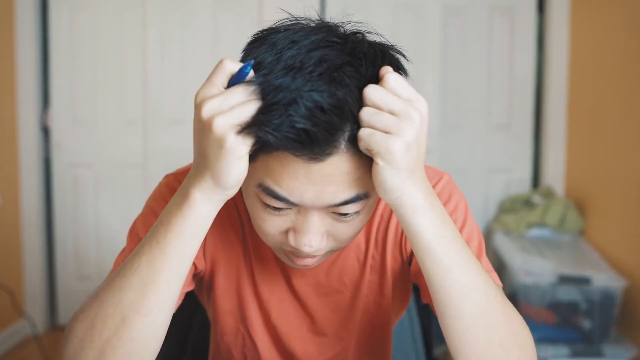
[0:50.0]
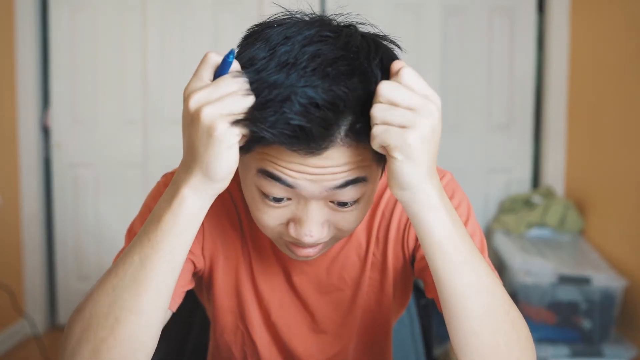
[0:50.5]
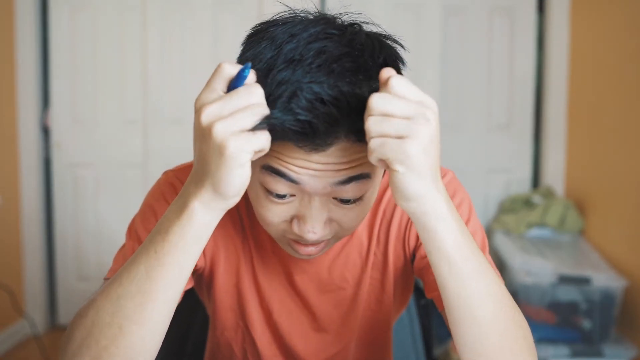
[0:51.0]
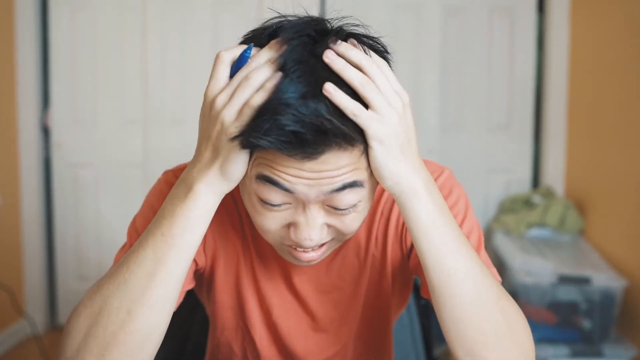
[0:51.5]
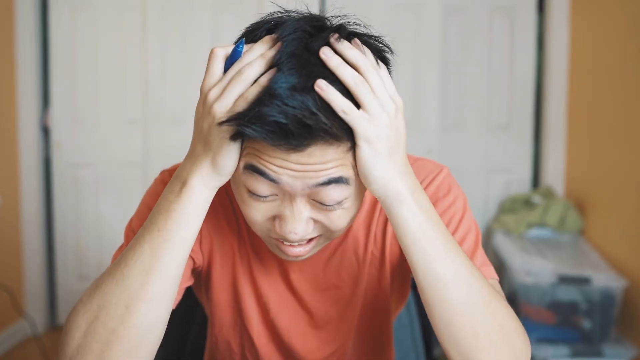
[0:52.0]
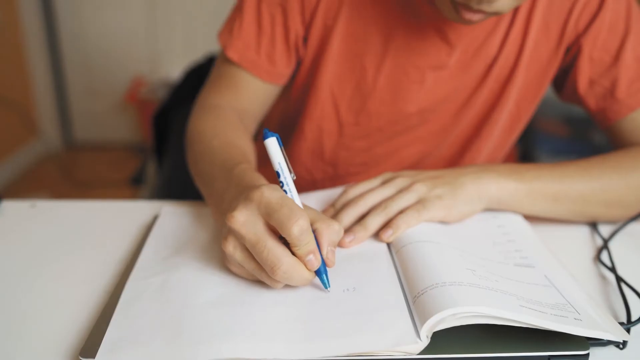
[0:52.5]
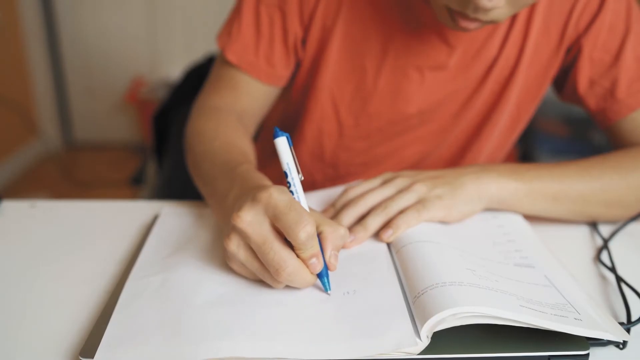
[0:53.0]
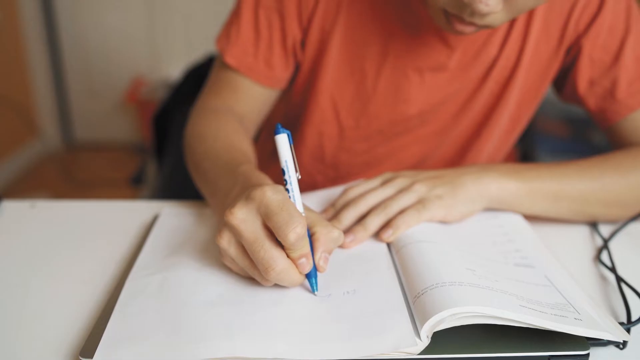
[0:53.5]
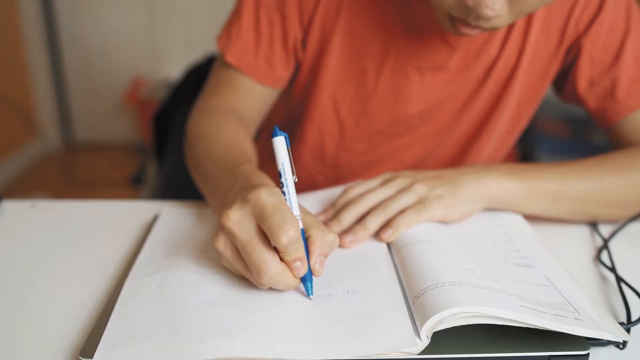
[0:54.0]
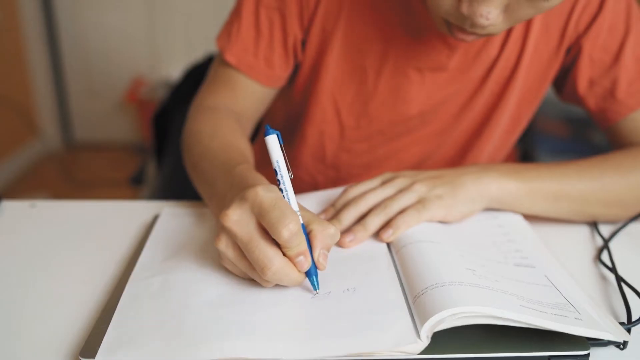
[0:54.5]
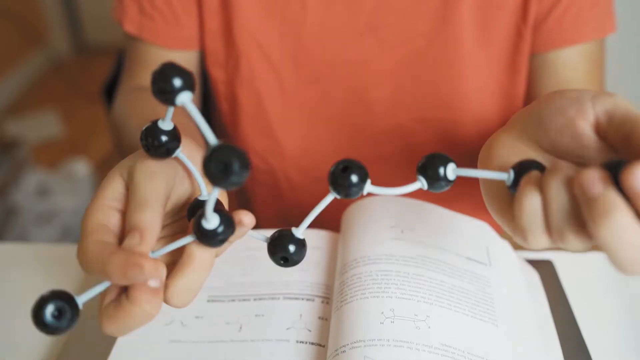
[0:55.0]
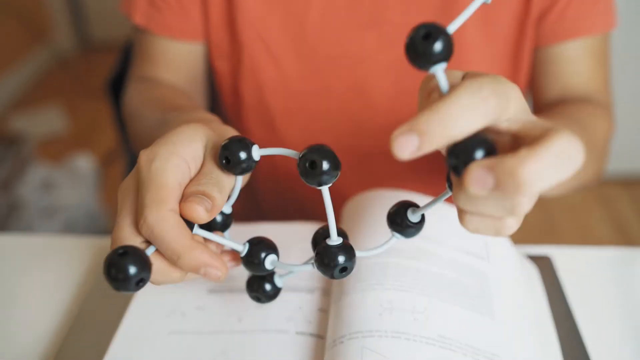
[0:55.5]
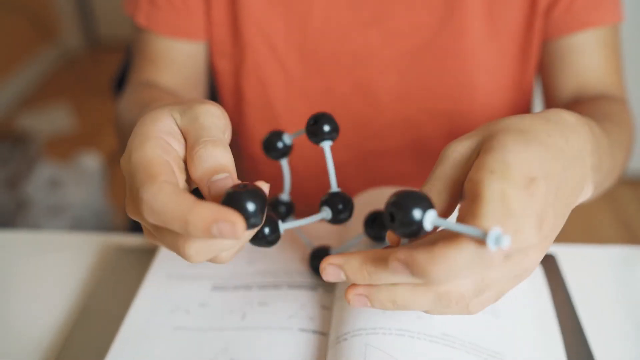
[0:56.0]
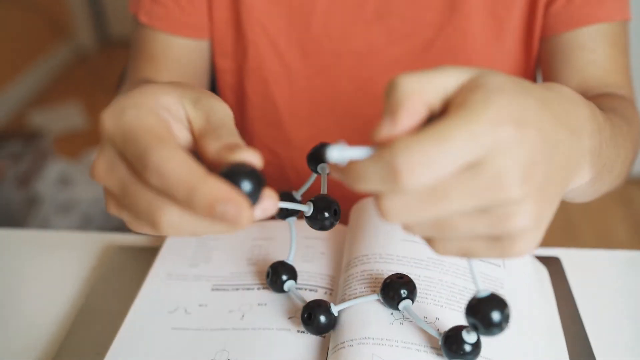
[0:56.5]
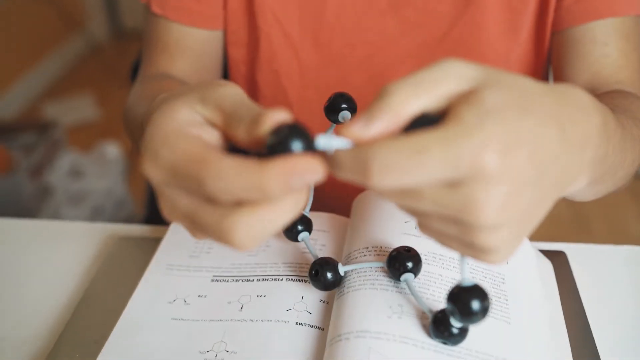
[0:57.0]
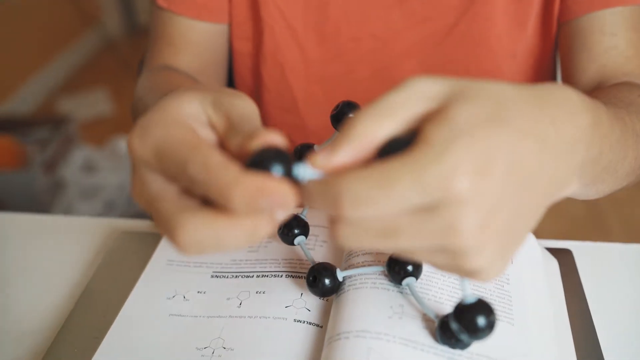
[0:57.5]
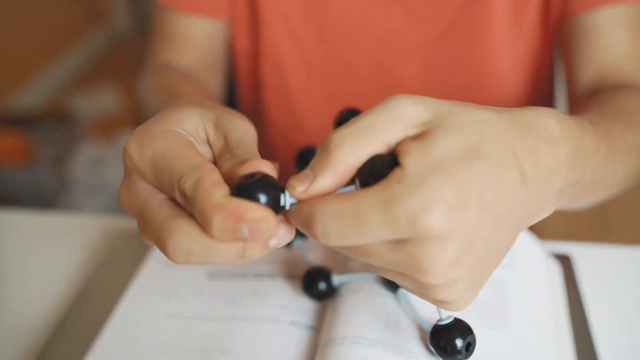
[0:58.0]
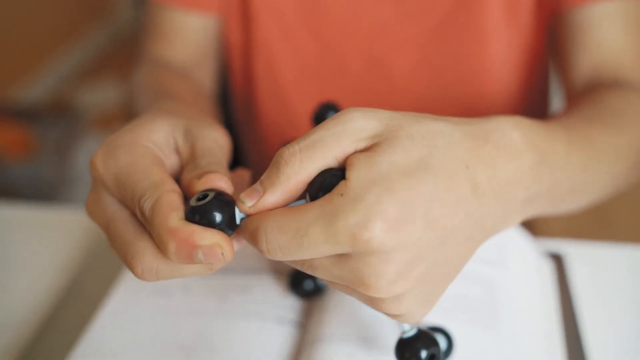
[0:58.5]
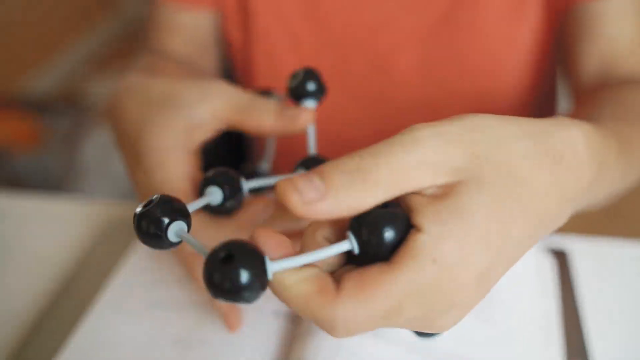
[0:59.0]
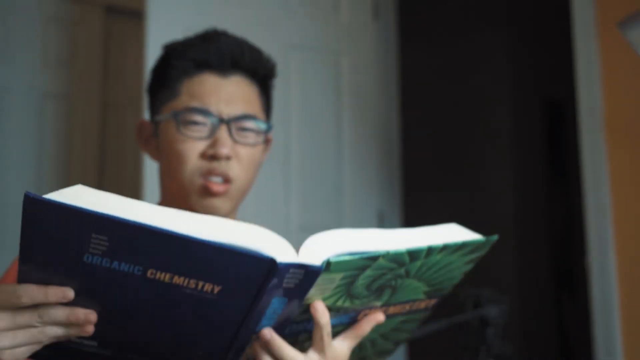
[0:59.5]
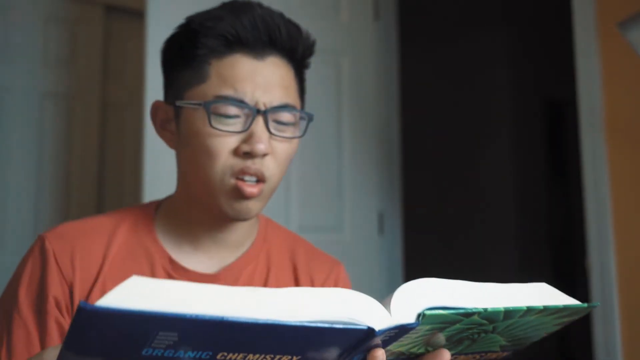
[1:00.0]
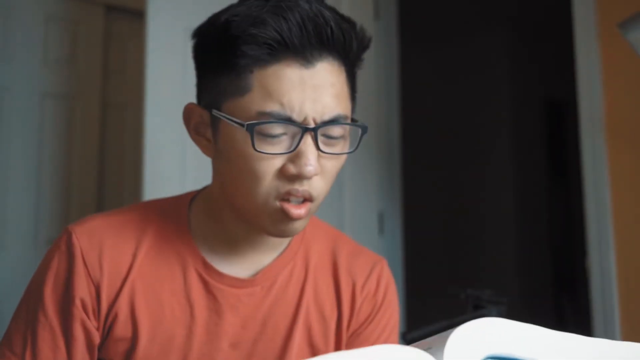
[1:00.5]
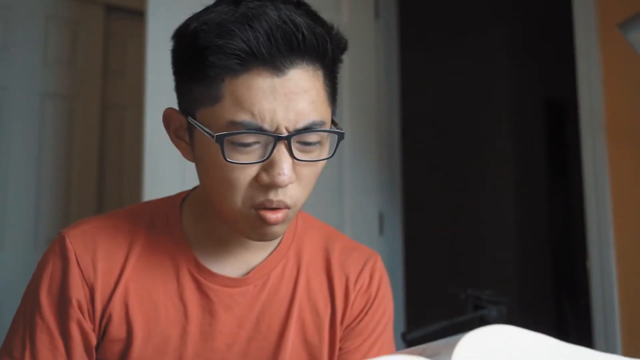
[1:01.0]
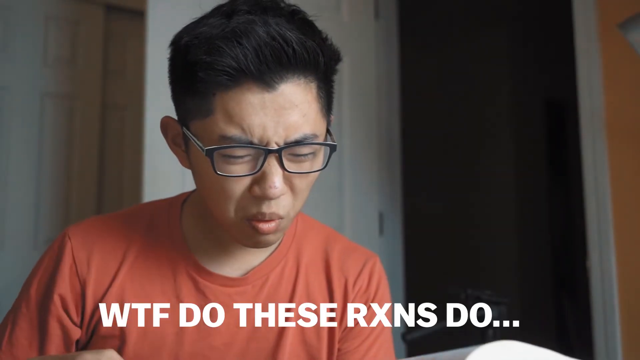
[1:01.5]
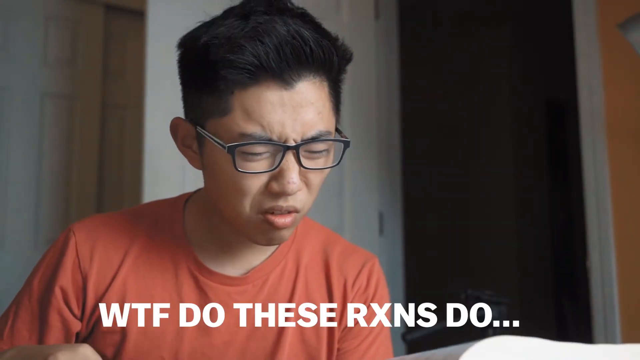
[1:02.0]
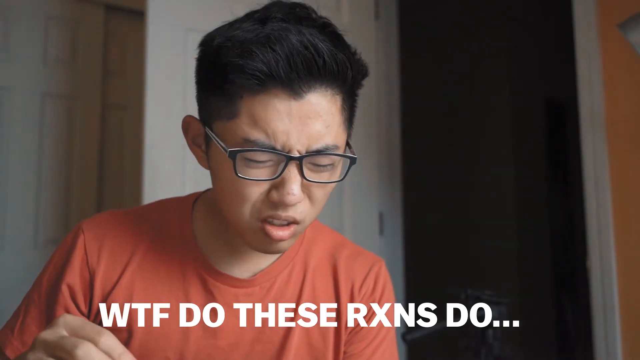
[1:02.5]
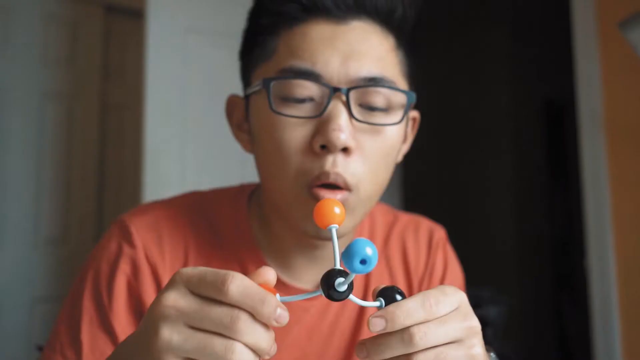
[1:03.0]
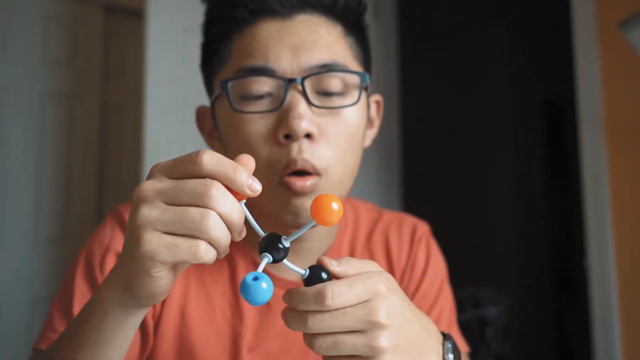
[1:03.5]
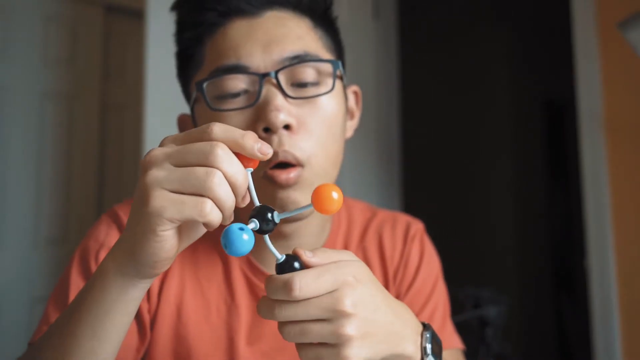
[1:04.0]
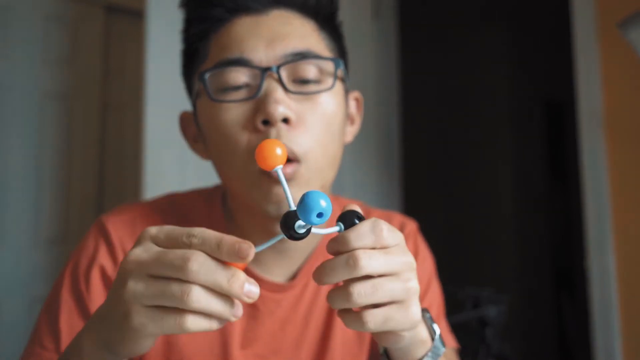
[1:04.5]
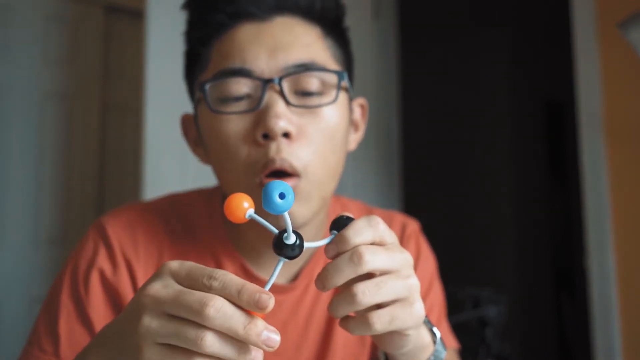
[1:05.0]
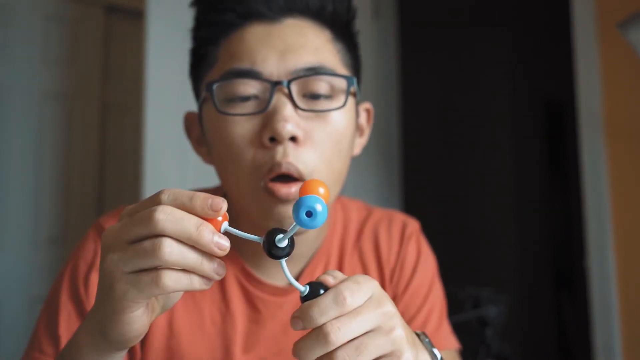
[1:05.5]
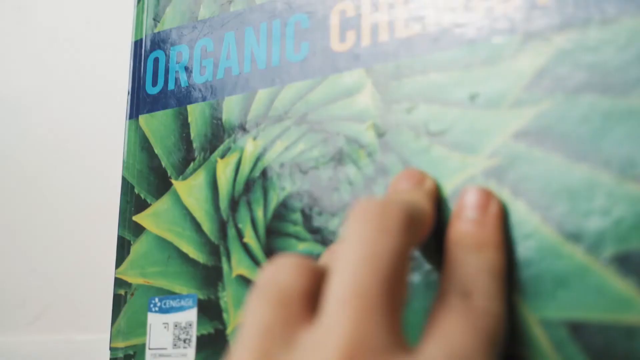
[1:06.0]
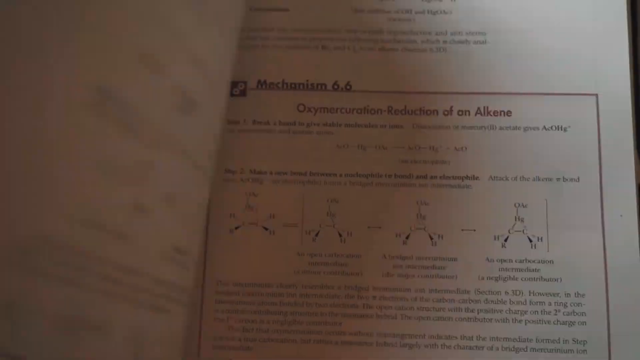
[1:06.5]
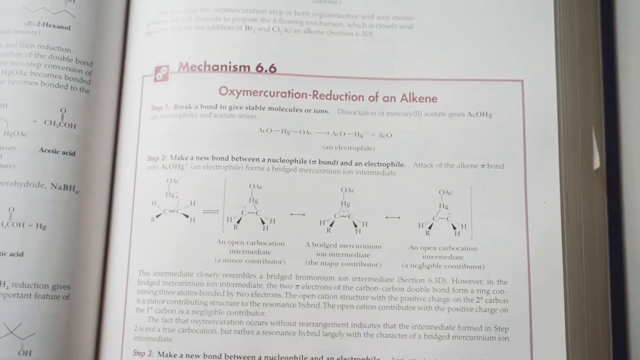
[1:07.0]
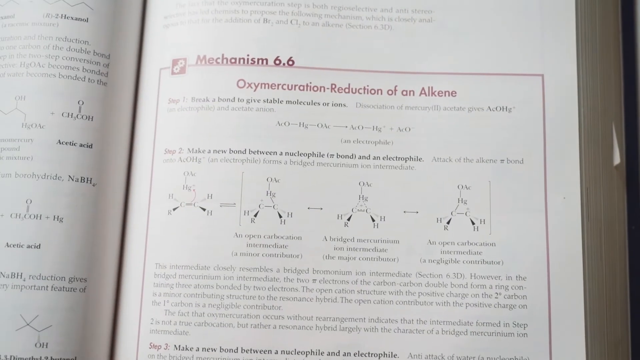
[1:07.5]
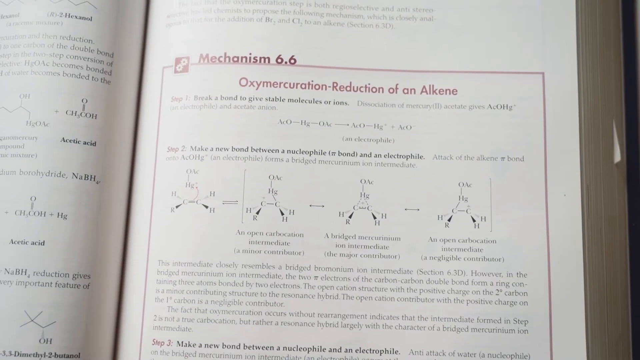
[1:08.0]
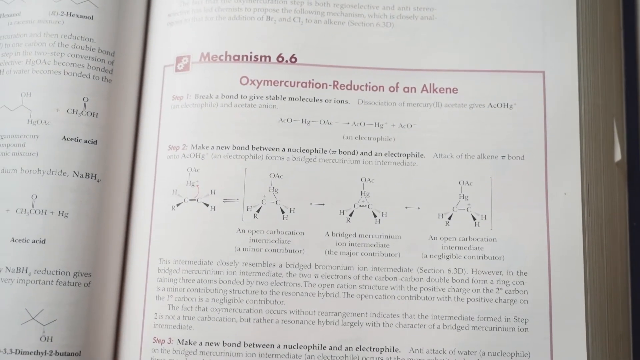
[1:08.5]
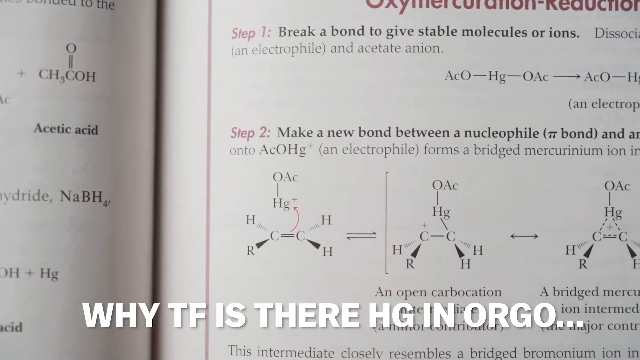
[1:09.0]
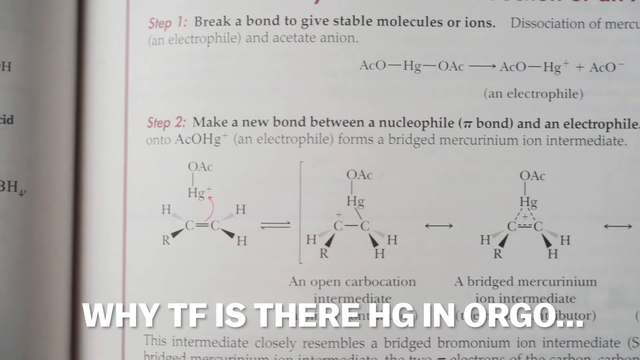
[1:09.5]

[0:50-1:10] A teenager in an orange shirt, with a worried expression, looks kind of frustrated and holds his head as if he does not understand what he is looking at. He has a pen in his right hand and writes in some kind of chemistry book. He then tries to build a chemistry structure with what seems to be a plastic toy. The same student is confused by the content of the book, and the text "what the fuck does this RxNS do" appears. He looks at the chemistry model, trying to understand, and then looks at the book again; the organic chemistry book says "oxymercuration reduction of an alkene". The text "why the fuck is there Hg in orgo" appears, and the student looks confused.